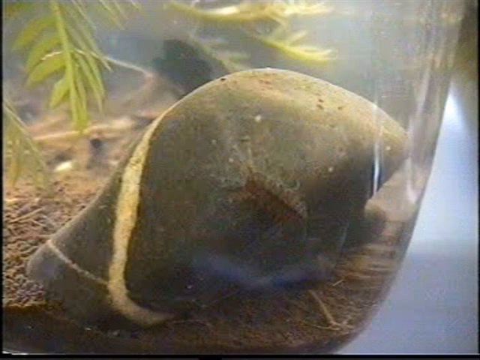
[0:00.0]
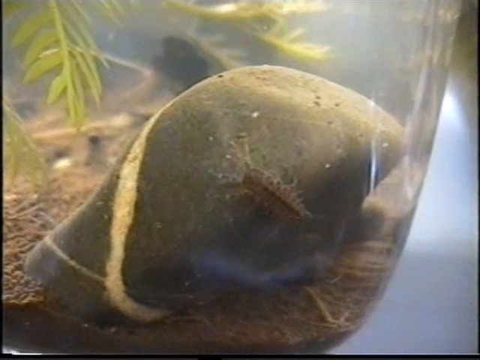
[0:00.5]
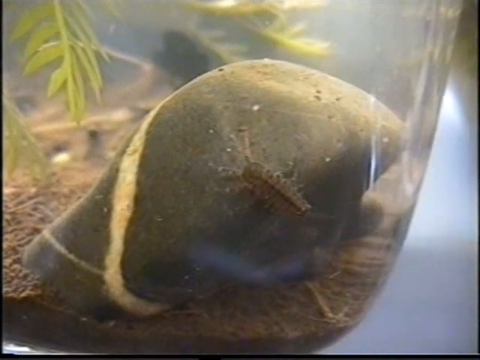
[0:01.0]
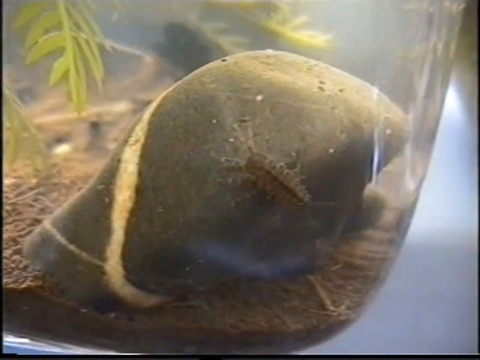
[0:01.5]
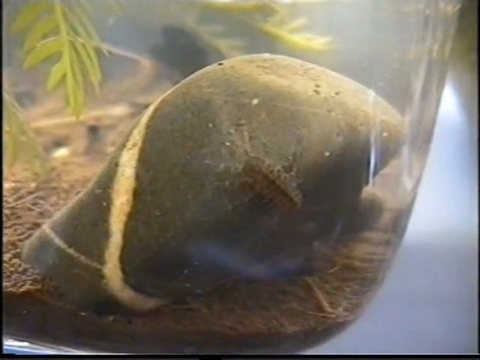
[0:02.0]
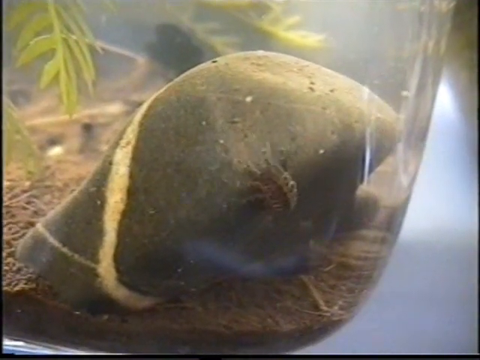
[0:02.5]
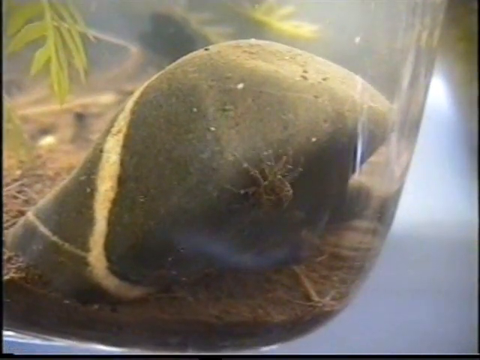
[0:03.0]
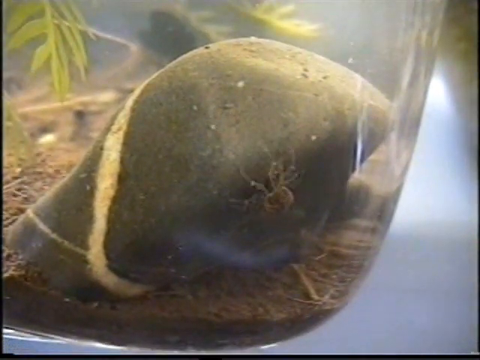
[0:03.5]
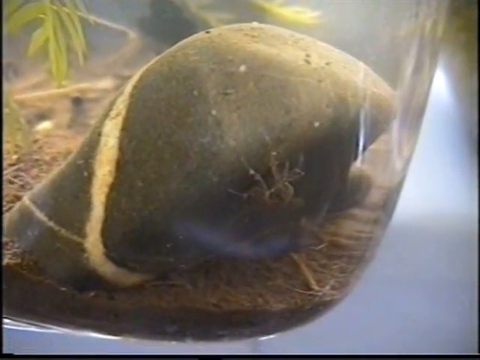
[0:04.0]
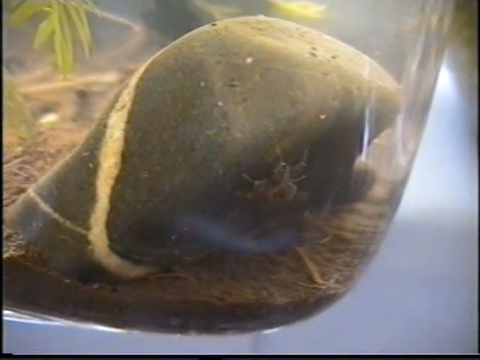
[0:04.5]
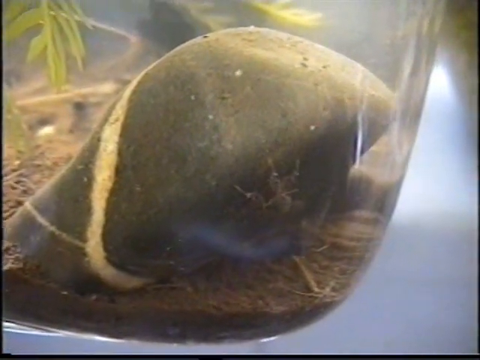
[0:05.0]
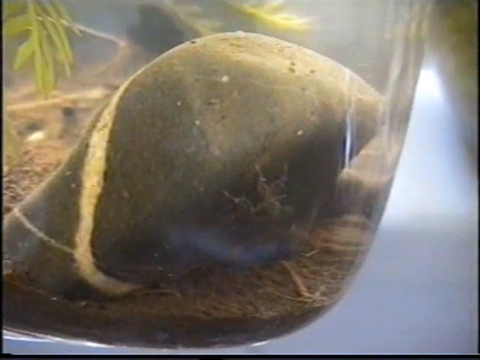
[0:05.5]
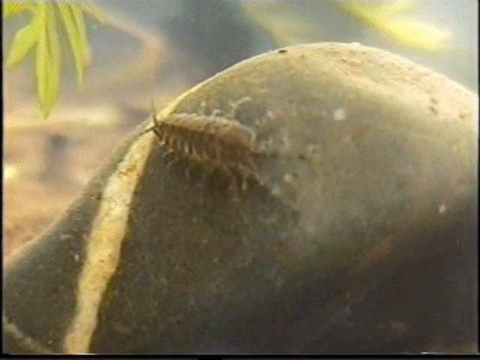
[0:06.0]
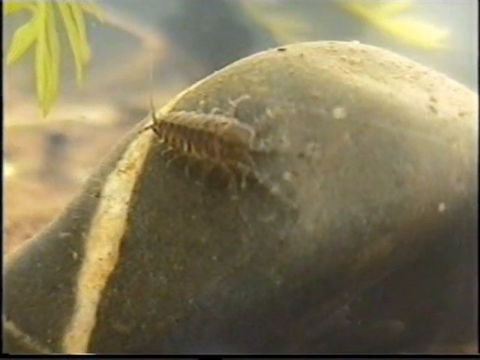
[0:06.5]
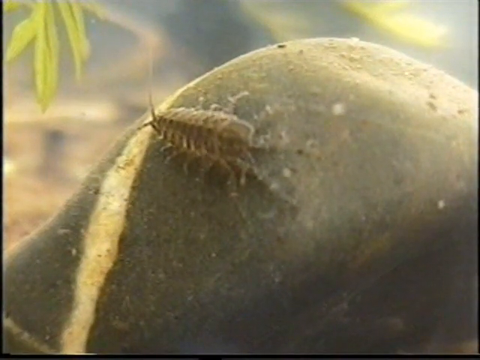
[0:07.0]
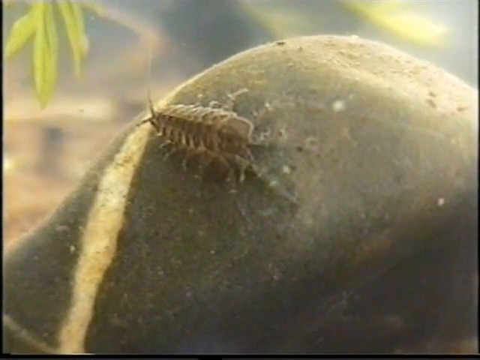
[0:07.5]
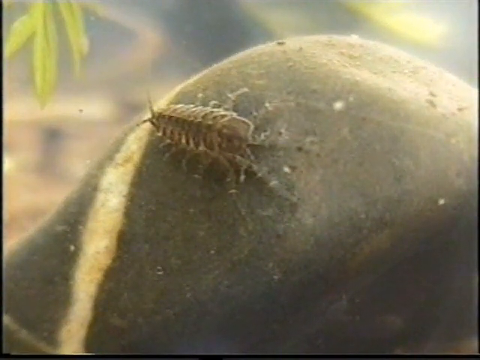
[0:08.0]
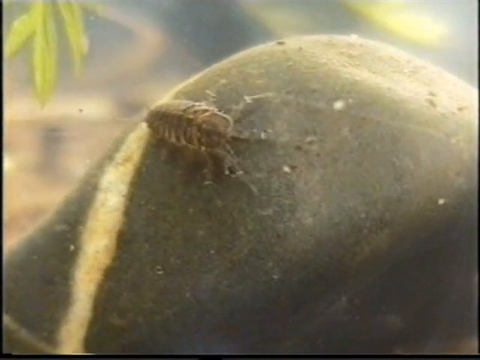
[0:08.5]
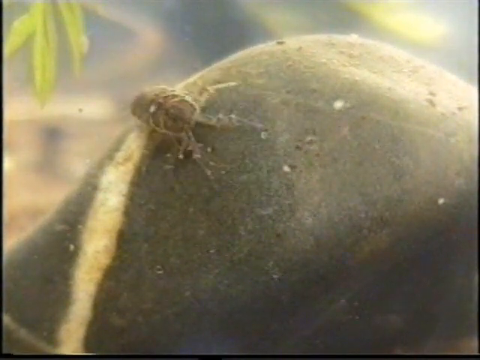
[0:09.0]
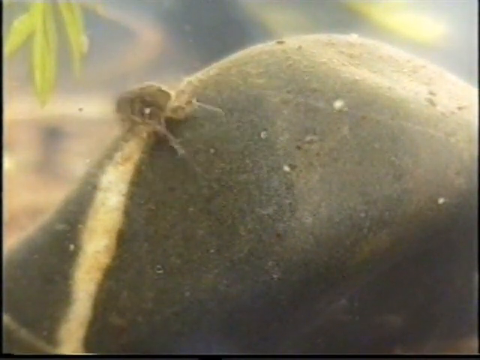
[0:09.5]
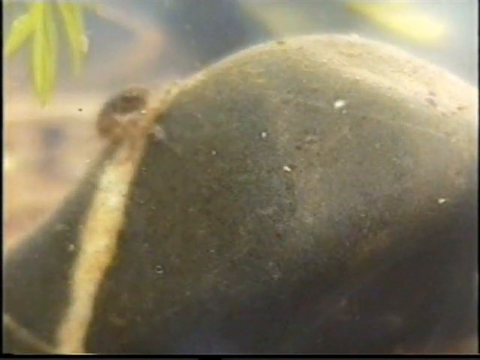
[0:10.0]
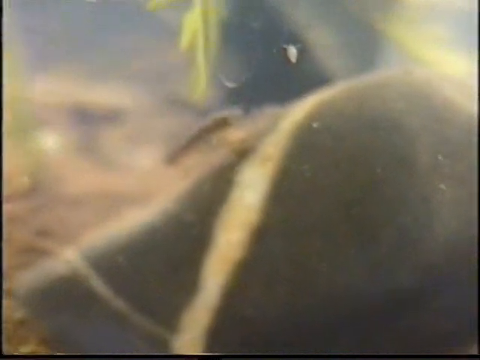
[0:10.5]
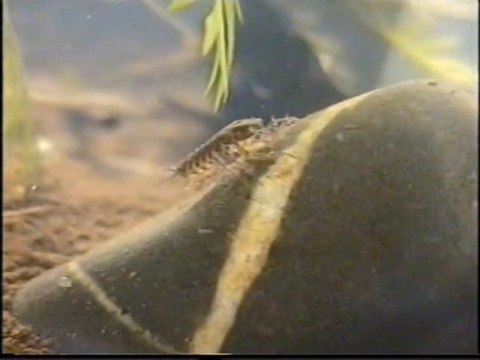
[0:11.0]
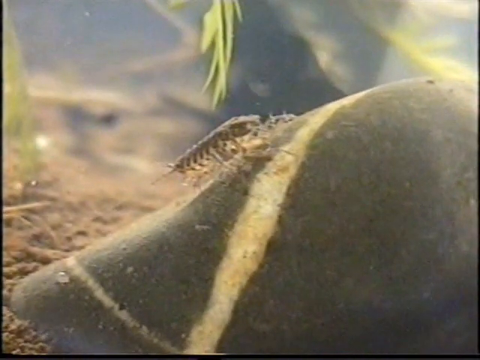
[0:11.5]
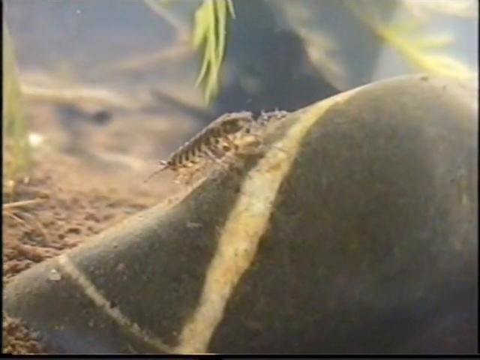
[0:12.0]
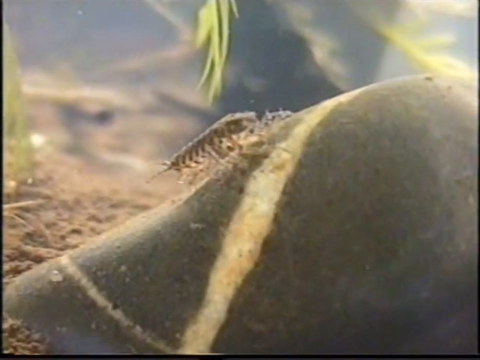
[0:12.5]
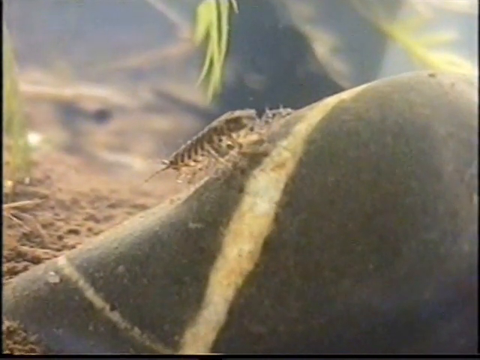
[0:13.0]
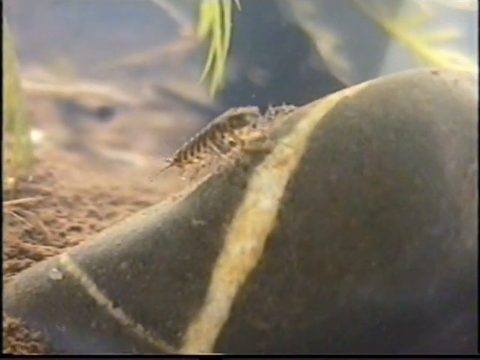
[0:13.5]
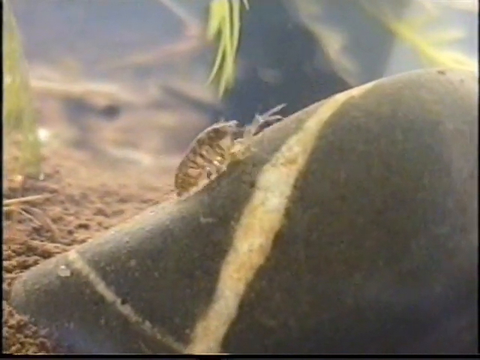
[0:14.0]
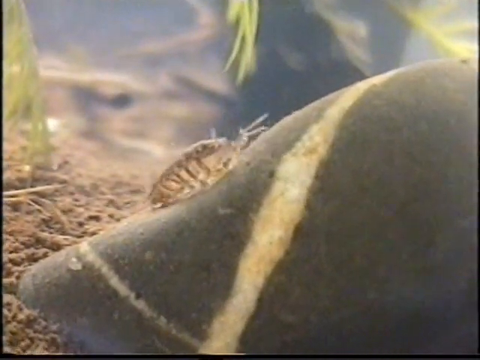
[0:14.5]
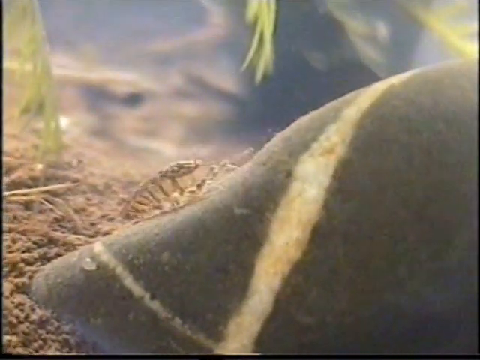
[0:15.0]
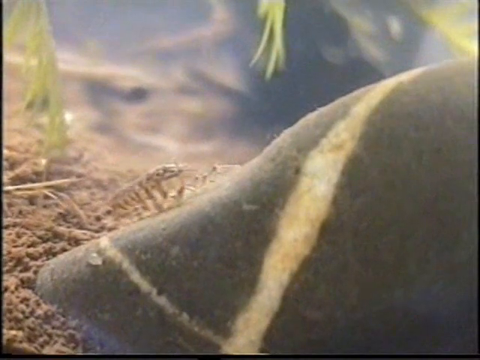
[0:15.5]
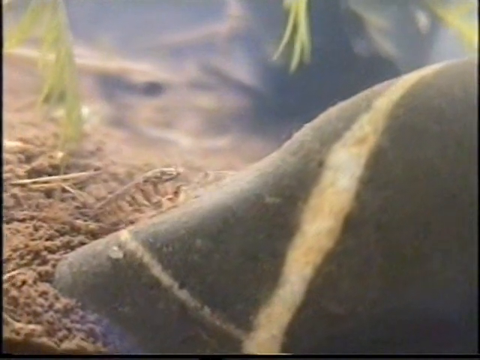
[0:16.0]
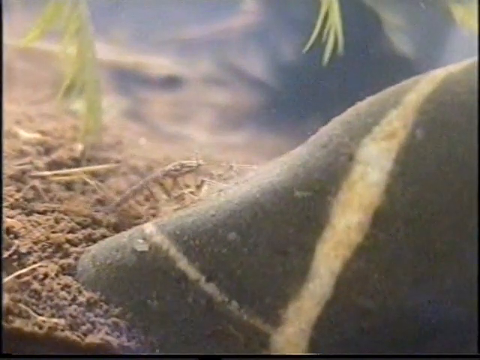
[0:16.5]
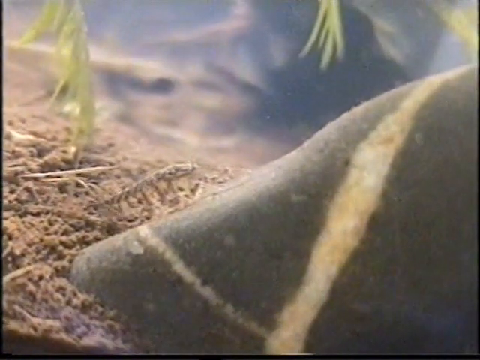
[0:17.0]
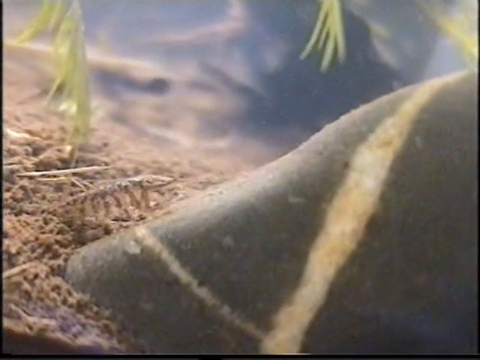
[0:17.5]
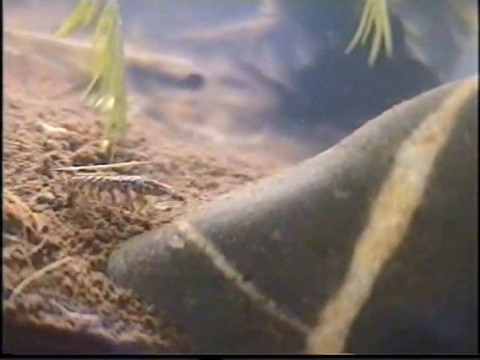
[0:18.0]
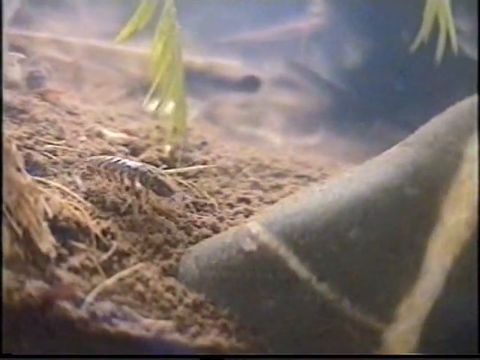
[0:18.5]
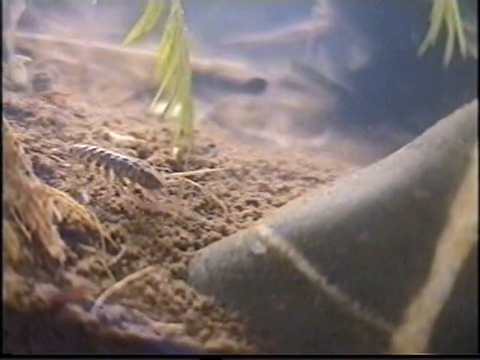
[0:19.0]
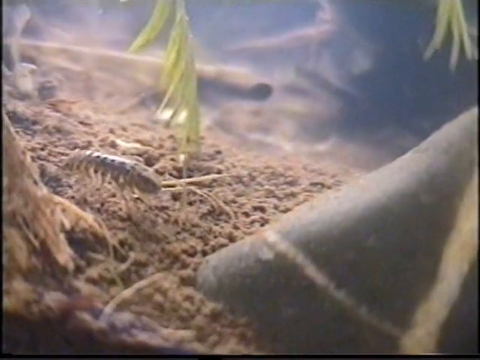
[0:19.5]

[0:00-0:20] A bug is in what looks like it could possibly be water. It is a little insect that looks kind of like a little centipede, and it makes its way down a colorful black and yellow rock into something like a grassy area in the bowl. Some little green, plant-looking trees are in the bowl as well. The bug looks like a little pill bug of some sort, with multiple legs on each side and very long antennas. The container appears to be round and clear, and the rock is pressed against the clear glass container. The water looks rather dirty. The bug travels along the top of the rock and also along the back side of it, not really hiding itself at all.